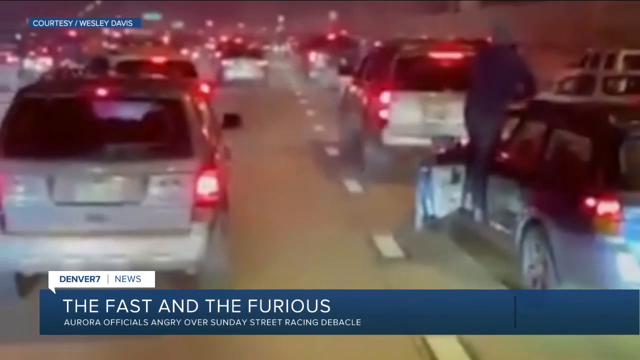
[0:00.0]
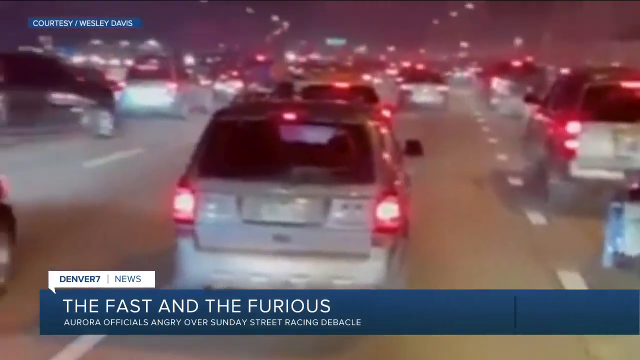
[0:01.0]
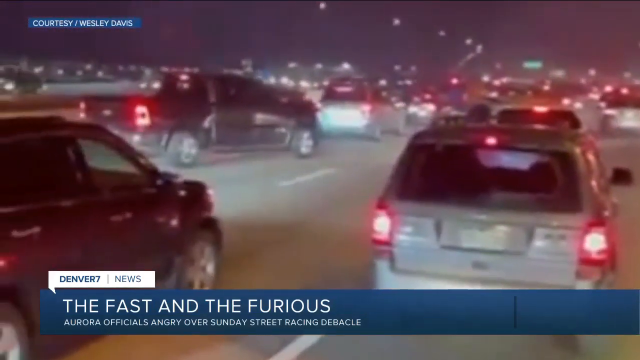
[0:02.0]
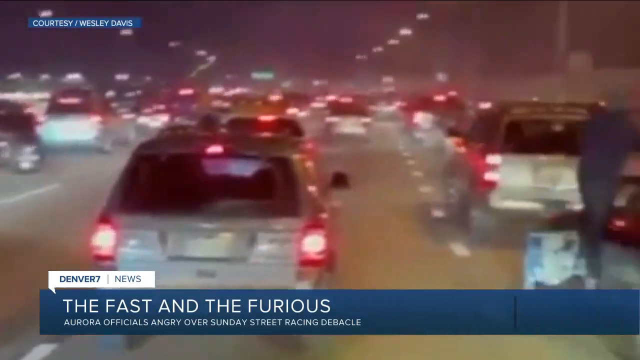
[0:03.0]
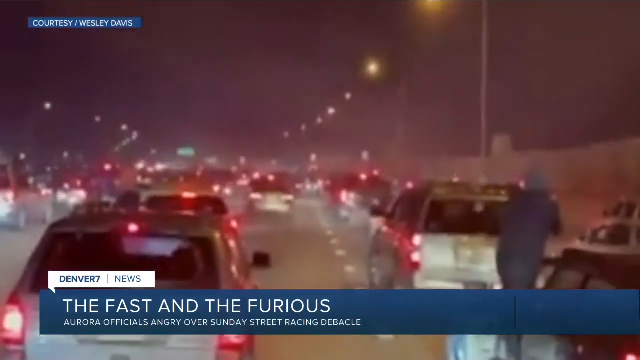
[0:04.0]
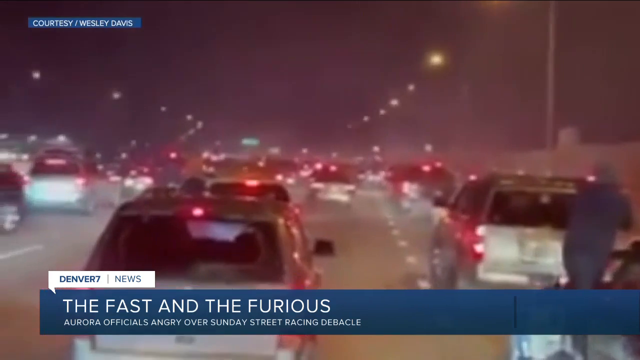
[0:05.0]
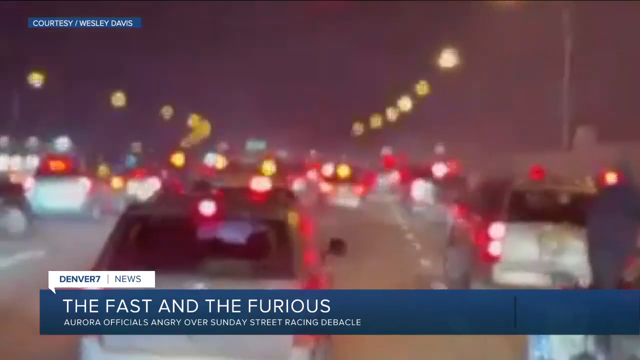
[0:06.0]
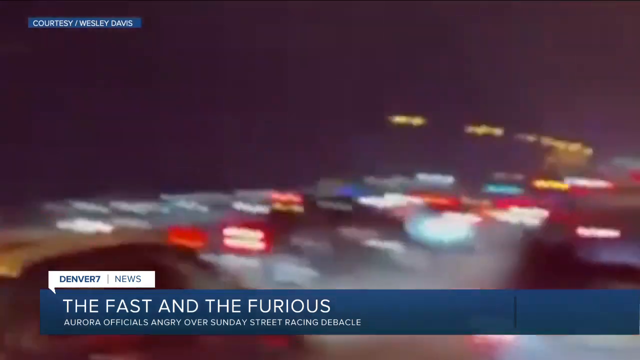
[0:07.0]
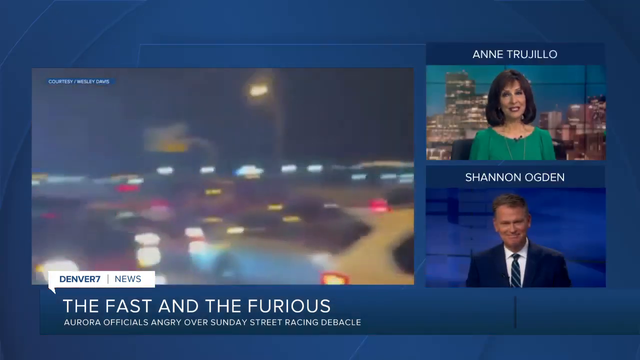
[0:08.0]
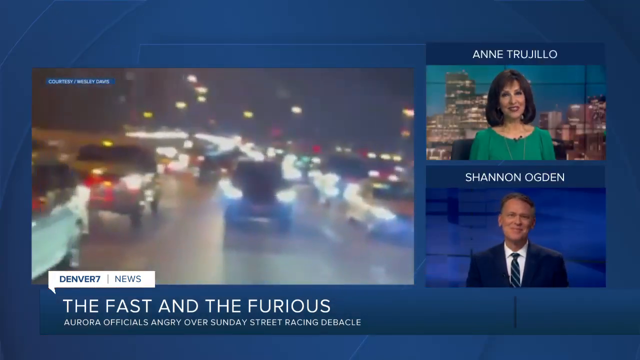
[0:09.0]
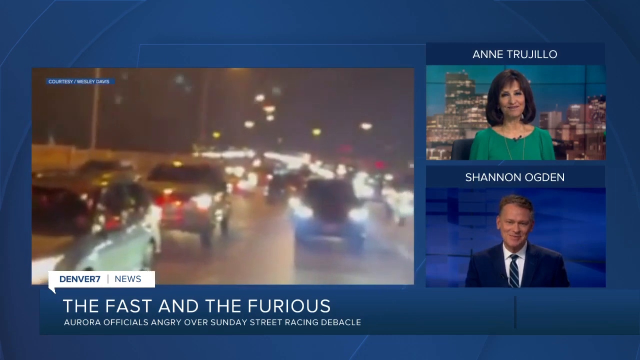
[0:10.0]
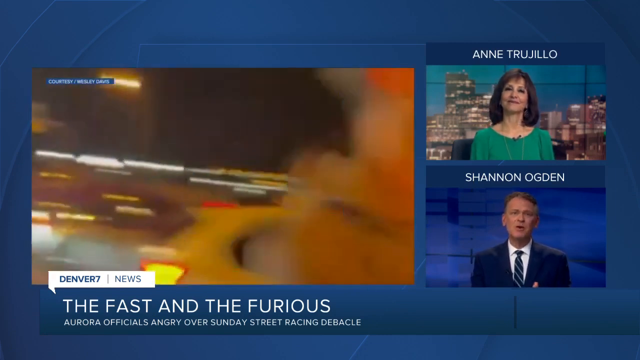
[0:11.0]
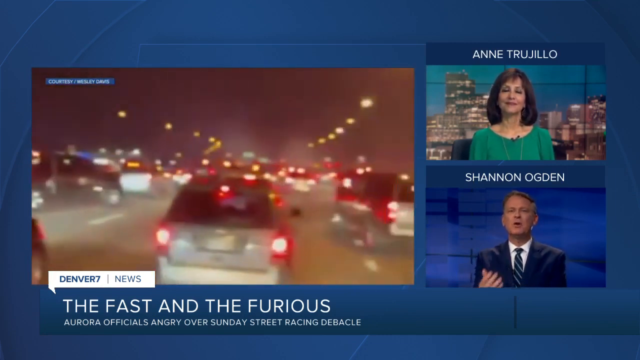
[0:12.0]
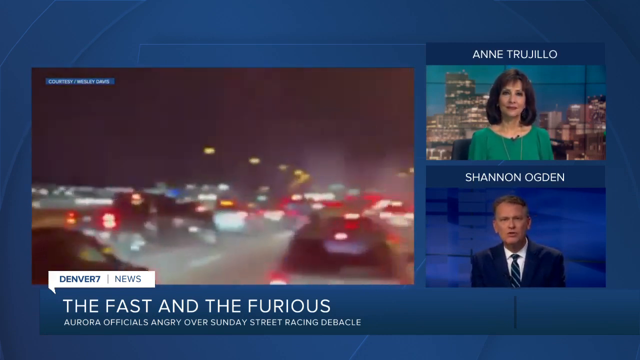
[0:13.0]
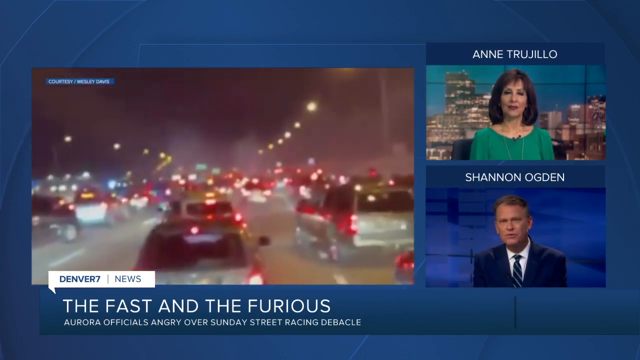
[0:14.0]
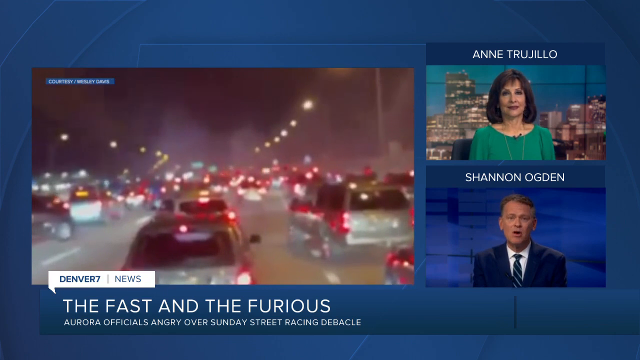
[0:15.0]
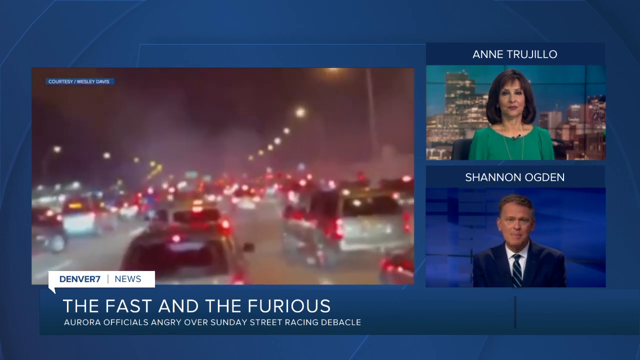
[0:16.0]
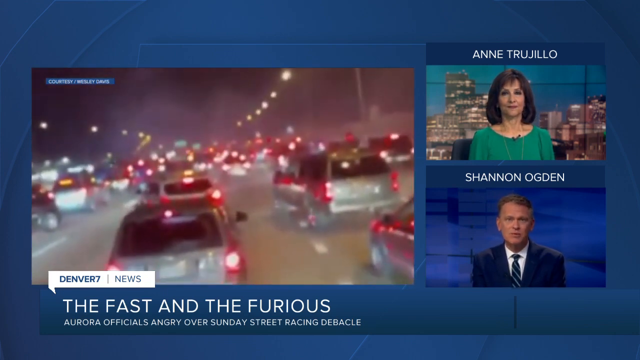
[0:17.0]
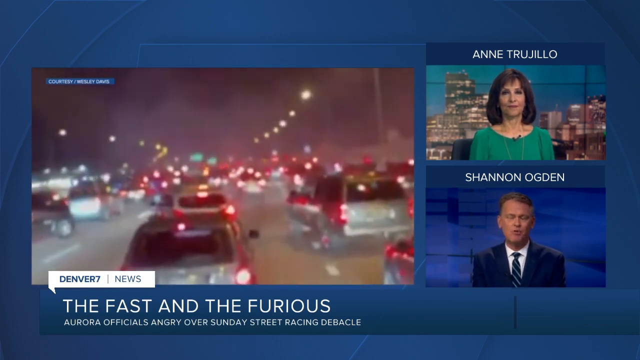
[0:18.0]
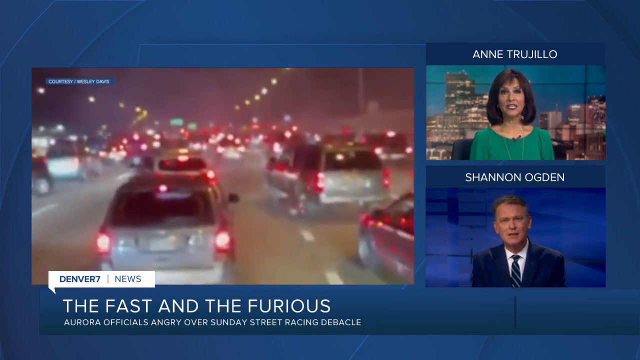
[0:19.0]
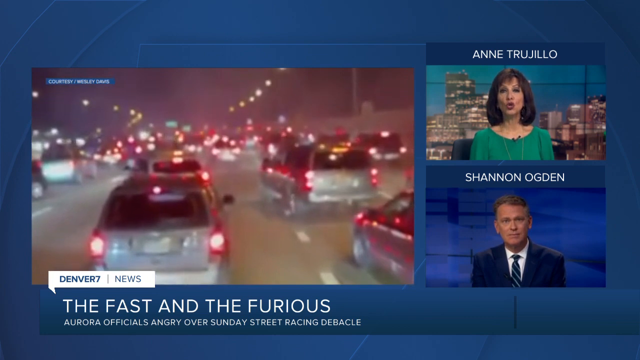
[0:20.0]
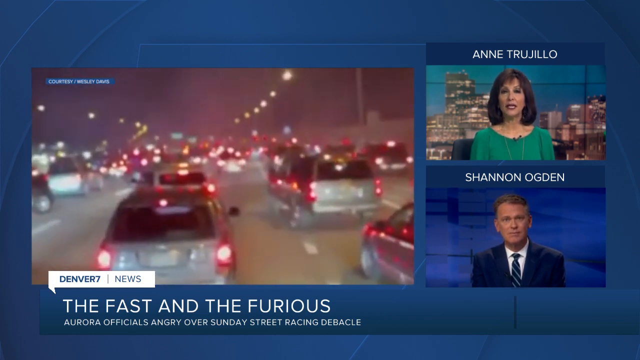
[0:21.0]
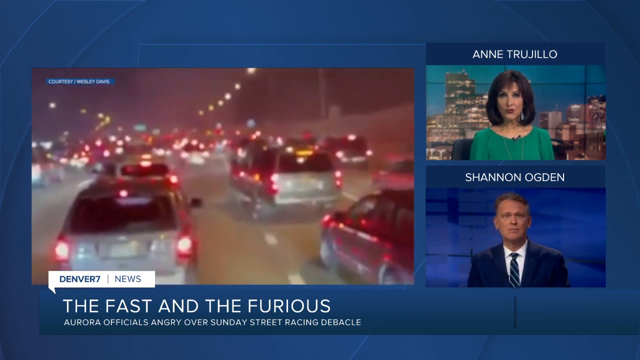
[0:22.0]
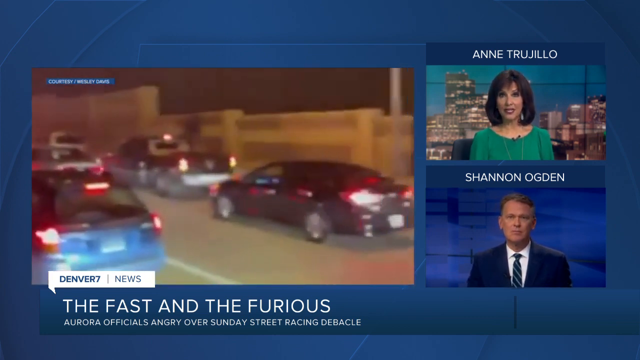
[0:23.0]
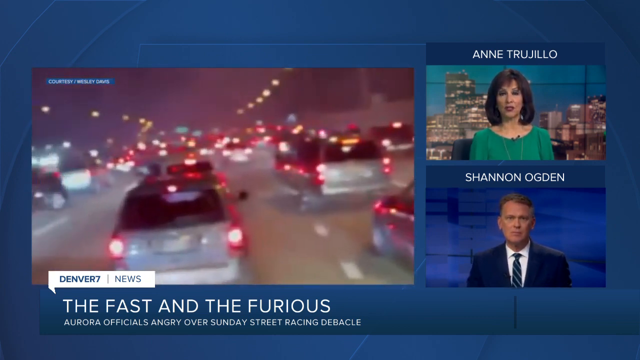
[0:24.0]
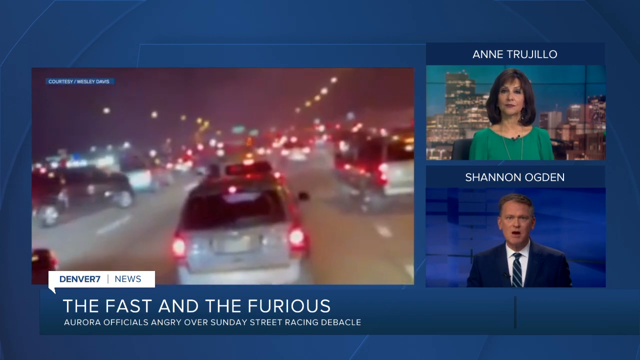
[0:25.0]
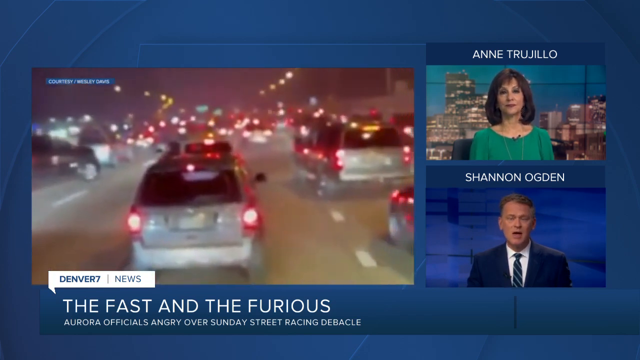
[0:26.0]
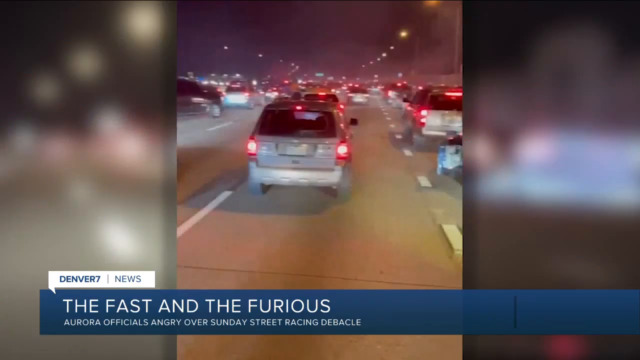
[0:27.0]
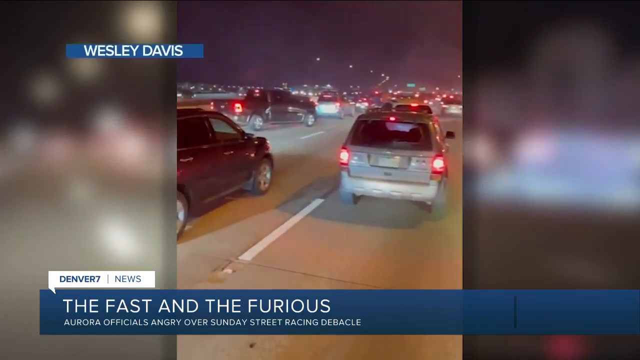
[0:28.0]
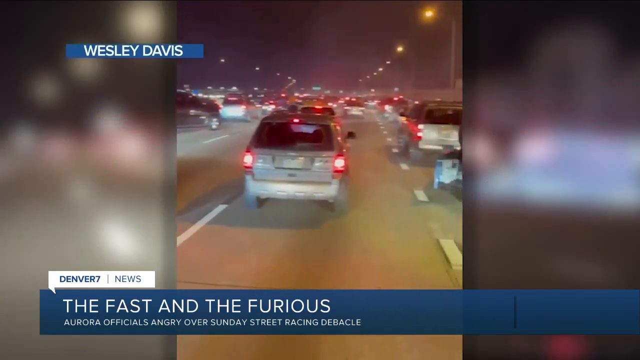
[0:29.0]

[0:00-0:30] The video opens on the backs of many different cars, SUVs and other vehicles. A blue banner at the bottom of the screen reads "The fast and the furious" with some additional subtext underneath it, and above it a white speech bubble reads "Denver7 NEWS". The camera moves to the left, then to the right and up; the picture blurs and readjusts, and the camera starts to swing around rapidly. Two people appear on the right side of the screen: the first is a female with brown hair, a pale complexion and a green shirt, and below her is a Caucasian male in a blue suit with short gray and brown hair. They begin to speak while the video on the left-hand side continues, with a blue background behind these videos. The scene changes: the two people are no longer on the right, and the video from the left-hand side is now center screen with a blurred background to either side. The name "Wesley Davis" appears in the top left of the screen.